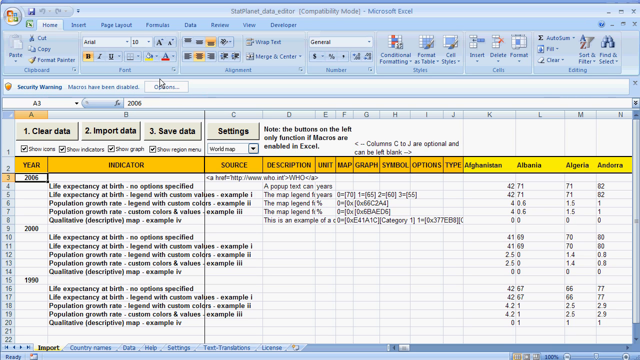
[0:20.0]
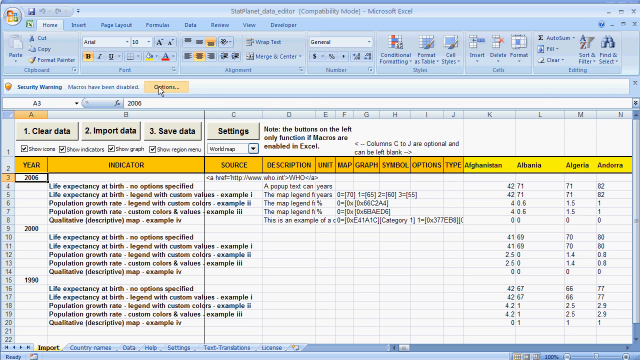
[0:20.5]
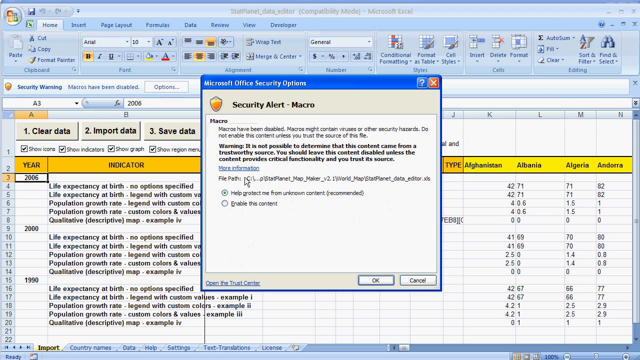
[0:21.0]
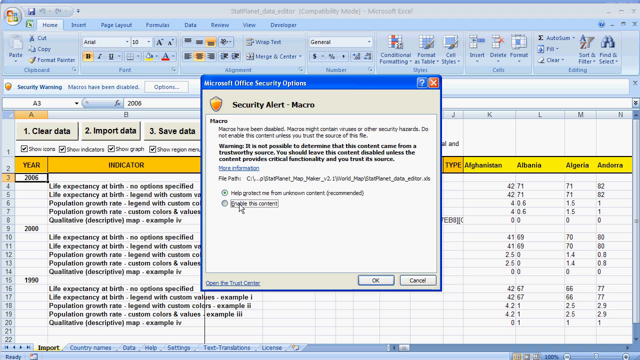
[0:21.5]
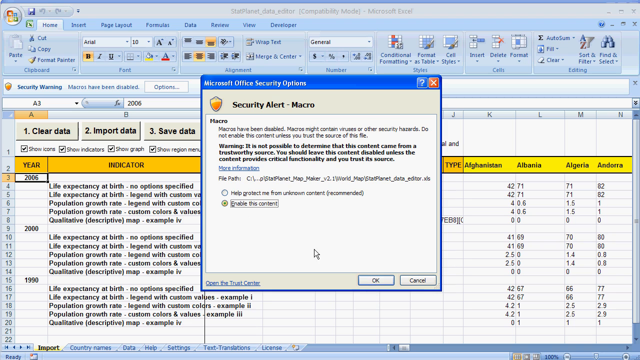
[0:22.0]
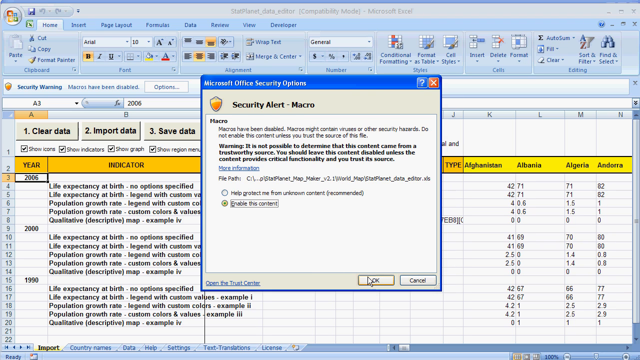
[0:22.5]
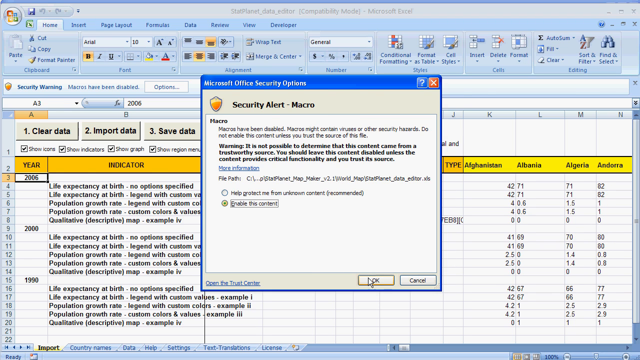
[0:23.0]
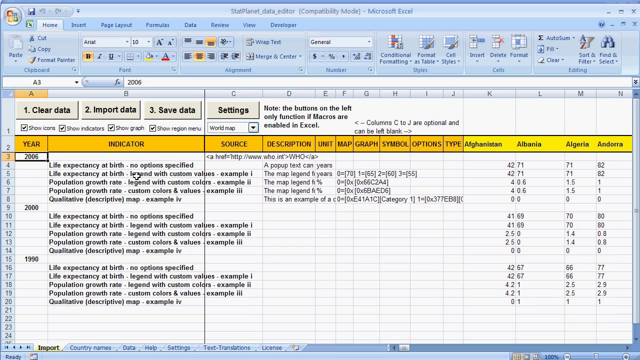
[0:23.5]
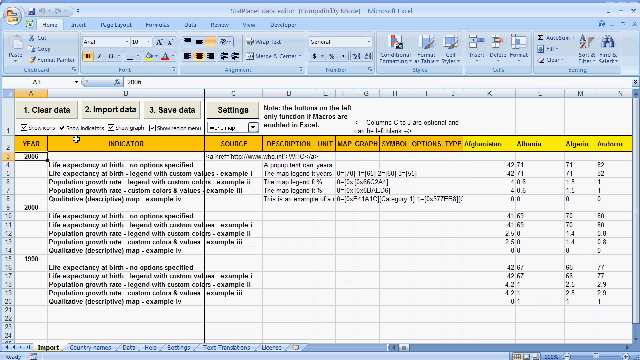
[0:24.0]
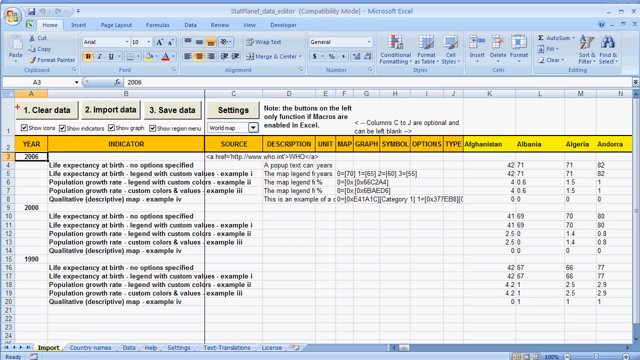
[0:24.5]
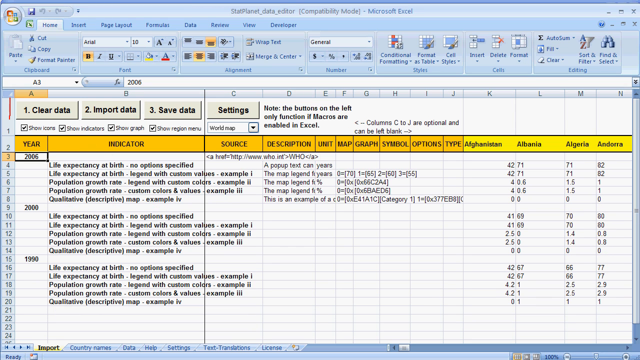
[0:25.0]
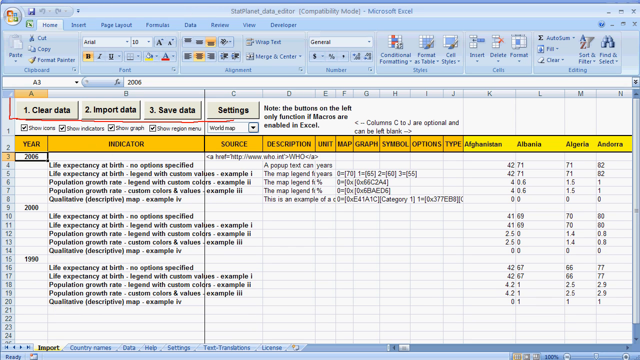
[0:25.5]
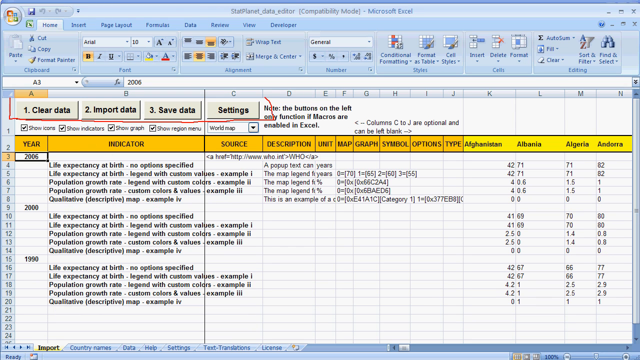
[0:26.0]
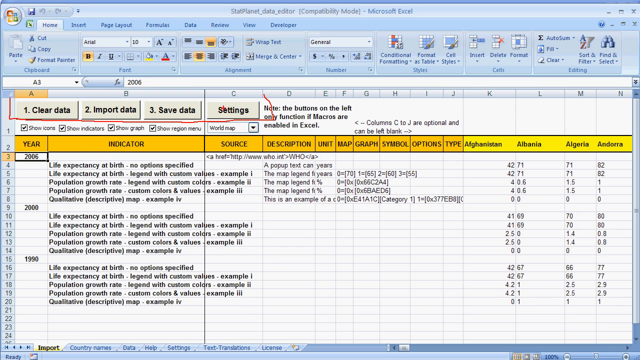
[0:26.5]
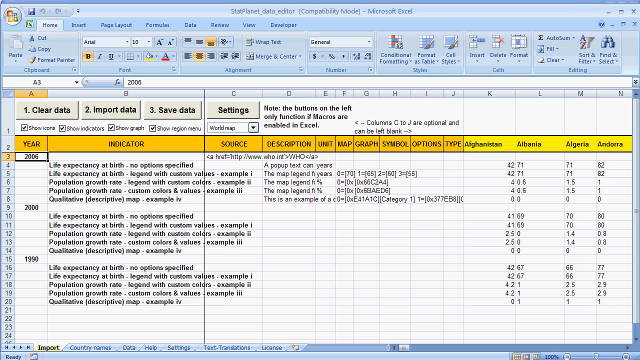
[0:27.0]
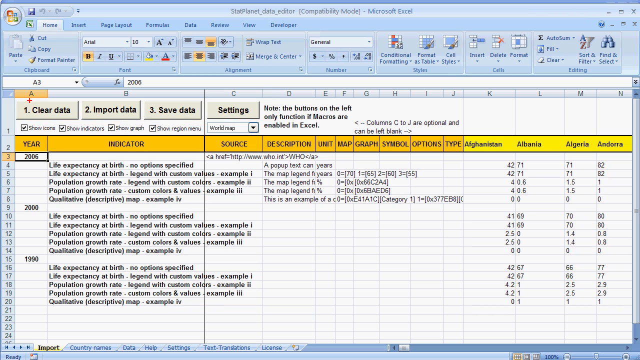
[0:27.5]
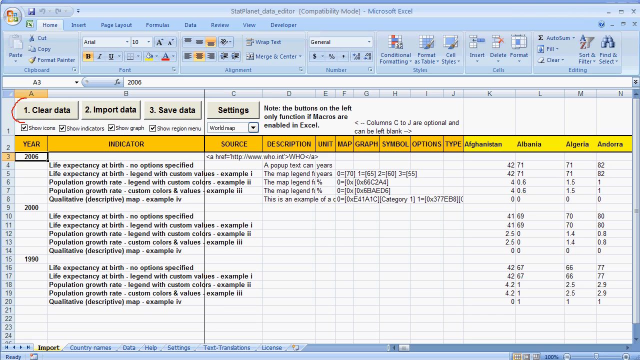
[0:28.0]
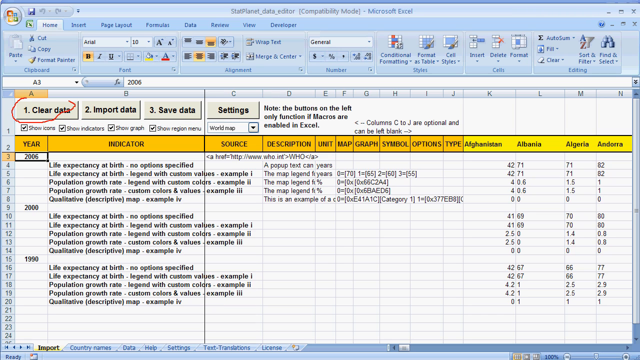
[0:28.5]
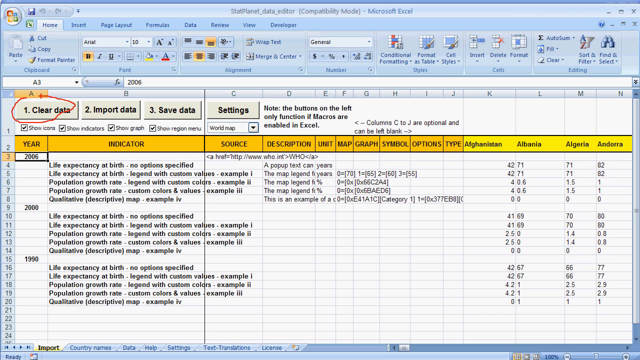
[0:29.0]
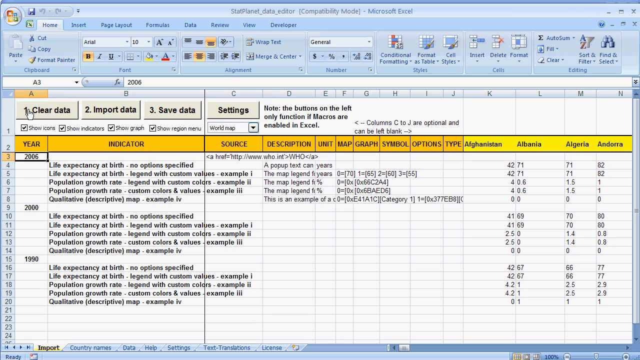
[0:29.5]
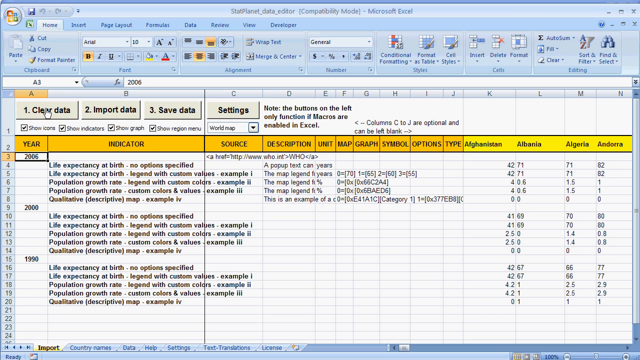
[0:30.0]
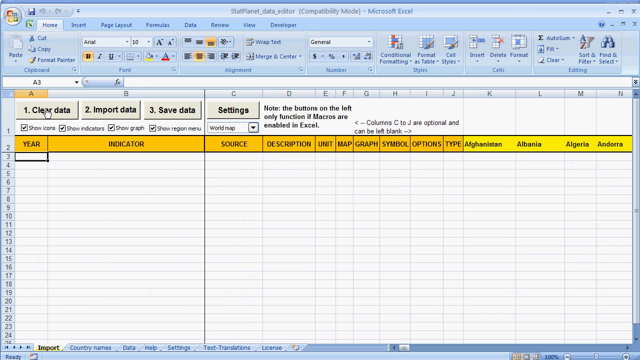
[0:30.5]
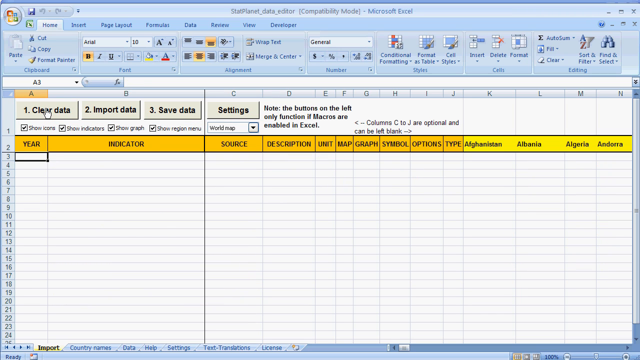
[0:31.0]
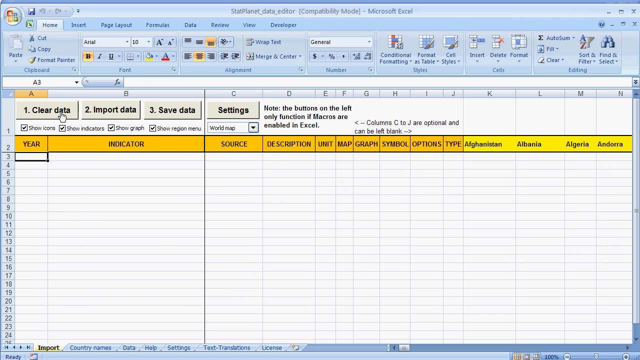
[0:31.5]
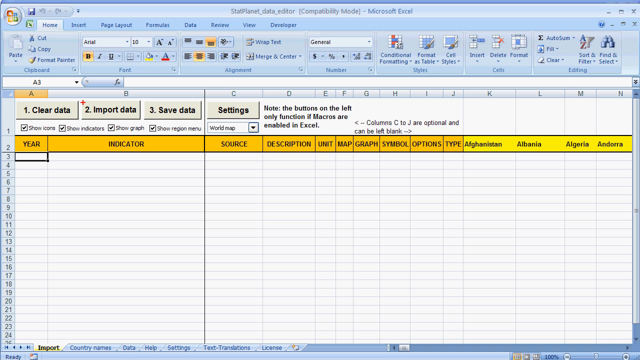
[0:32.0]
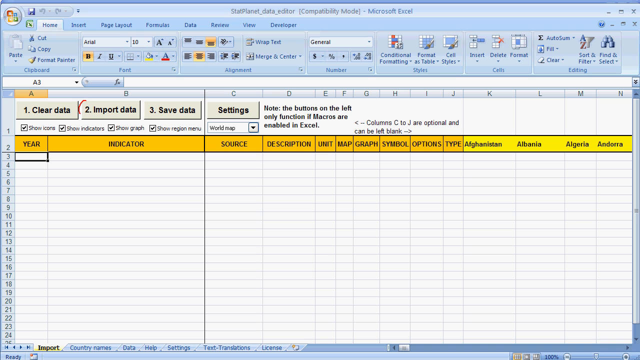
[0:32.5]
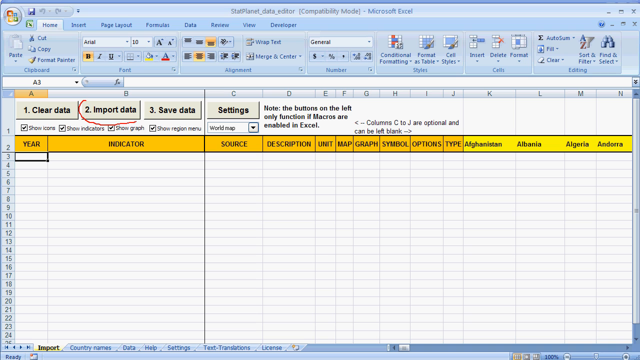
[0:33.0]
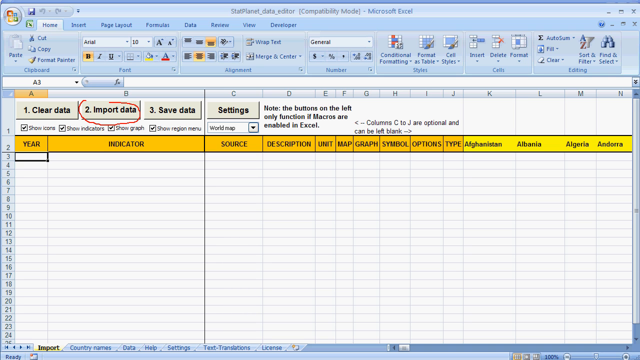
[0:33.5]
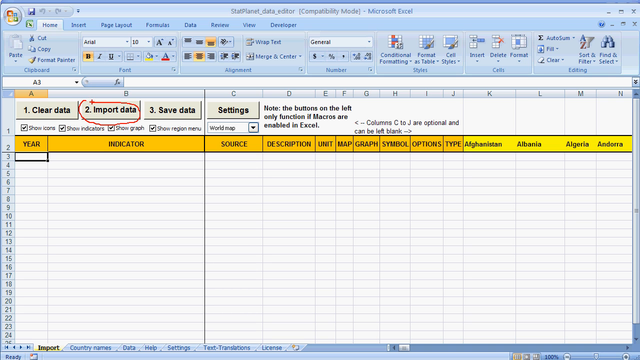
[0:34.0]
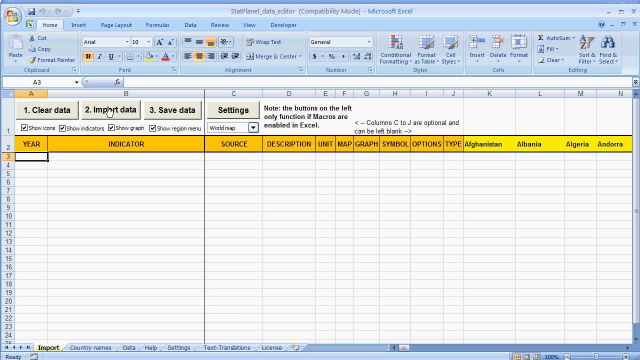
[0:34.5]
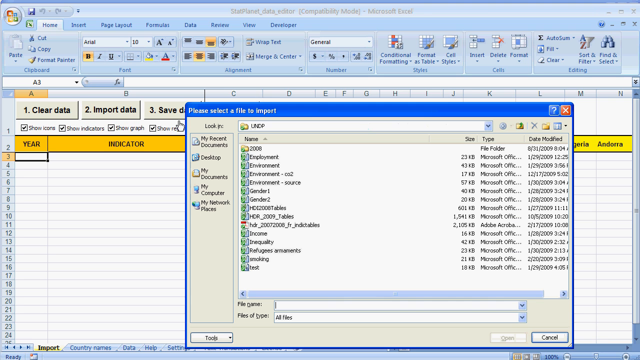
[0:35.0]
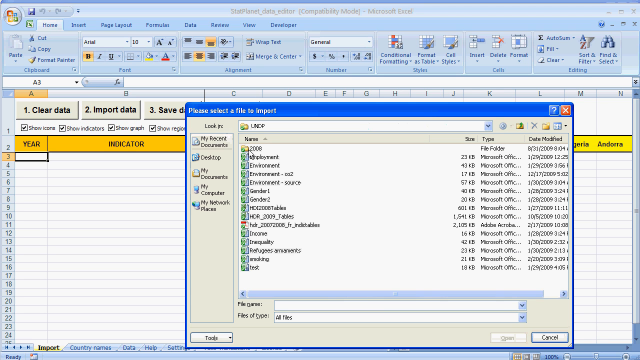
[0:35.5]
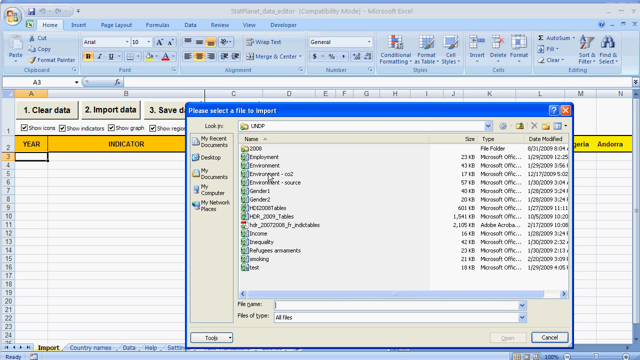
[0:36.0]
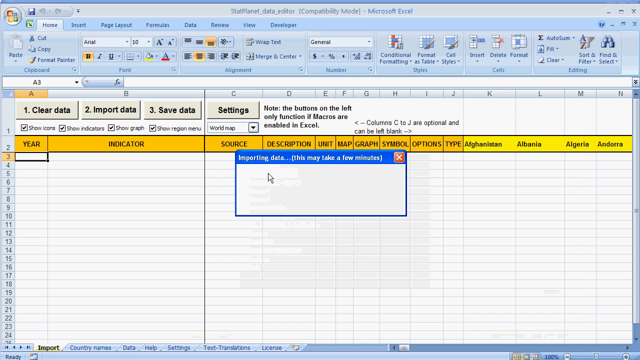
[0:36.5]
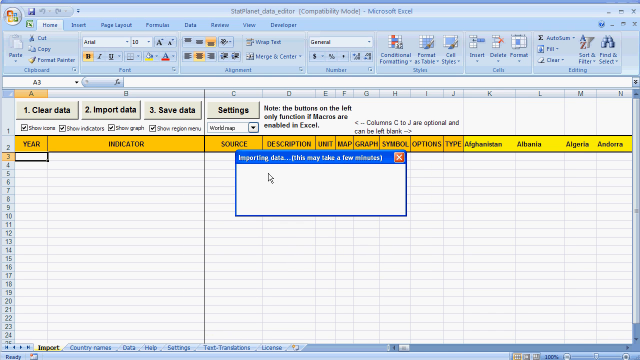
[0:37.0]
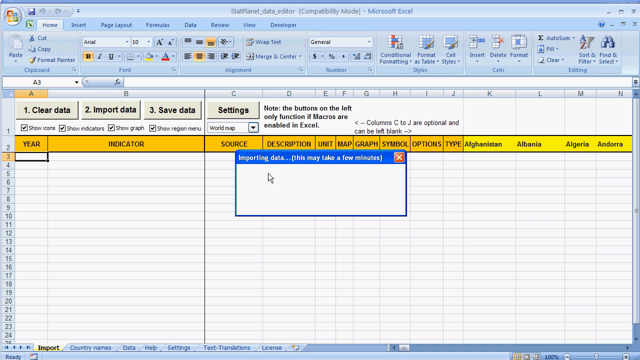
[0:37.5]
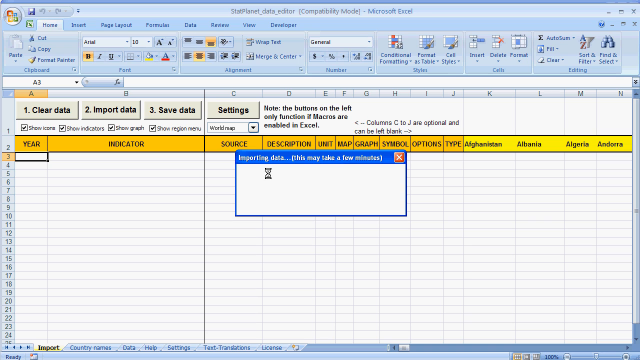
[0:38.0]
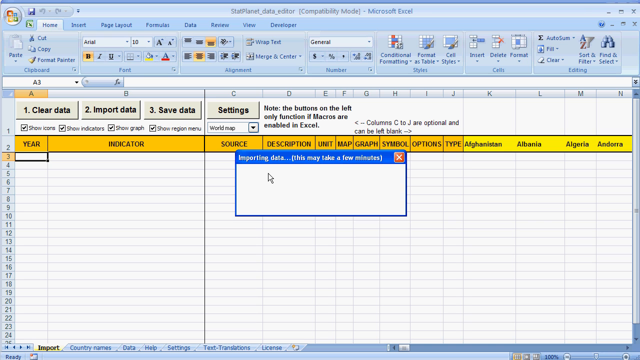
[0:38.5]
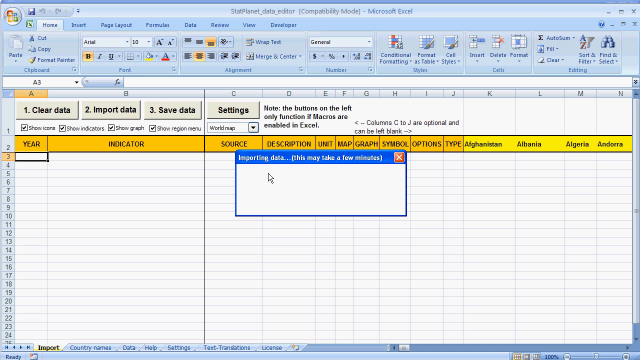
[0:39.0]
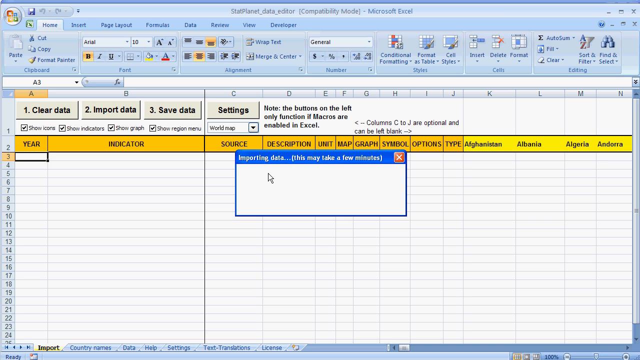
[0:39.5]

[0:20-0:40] A security alert about a particular file appears. The import data tab is circled. There are several tabs, and the window looks to be some type of spreadsheet. The clear data tab is circled and clicked, then the import data tab is circled and clicked, and some files are imported. The environment again looks to be Windows, though the exact window is unfamiliar.